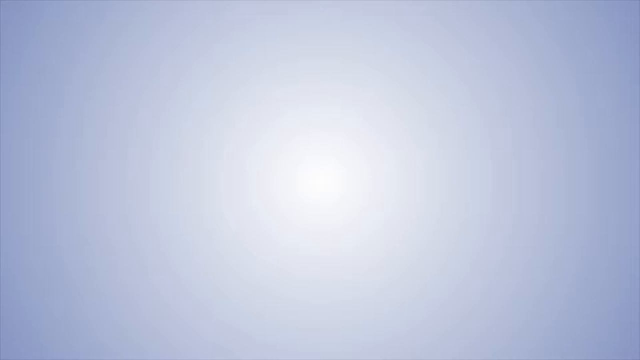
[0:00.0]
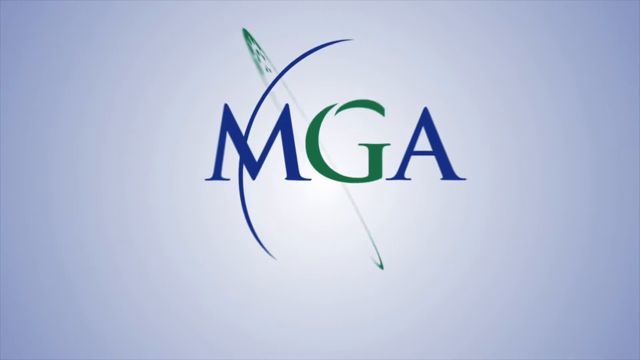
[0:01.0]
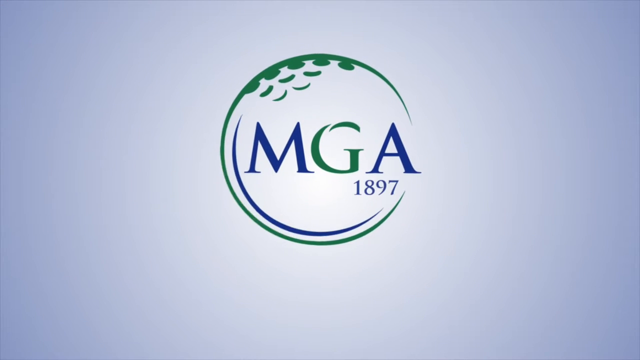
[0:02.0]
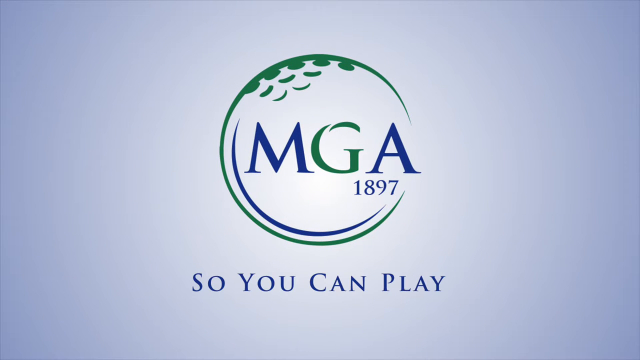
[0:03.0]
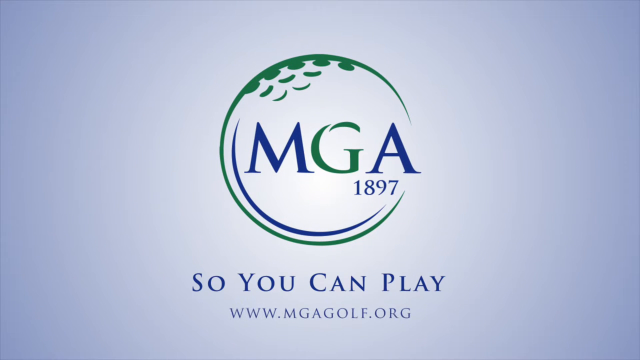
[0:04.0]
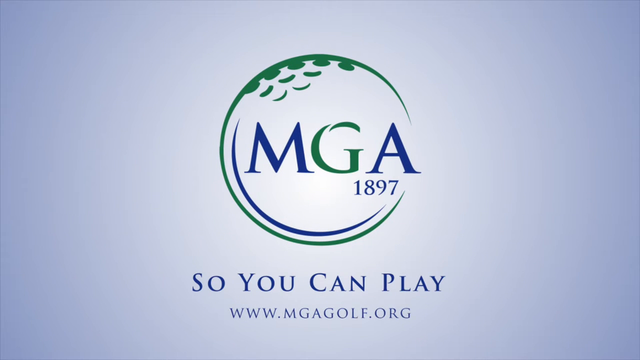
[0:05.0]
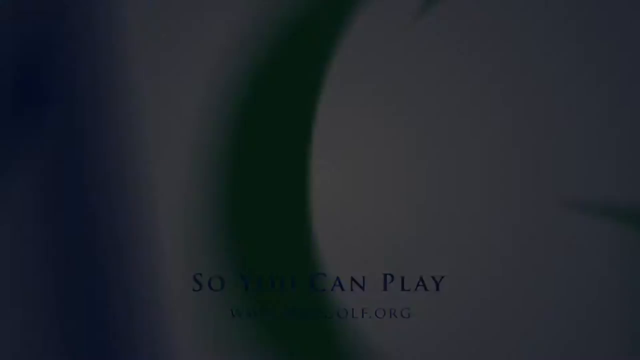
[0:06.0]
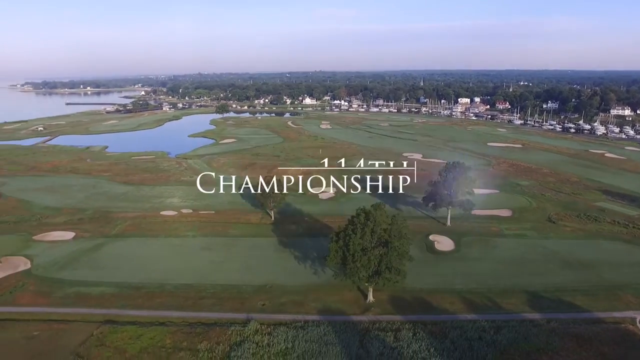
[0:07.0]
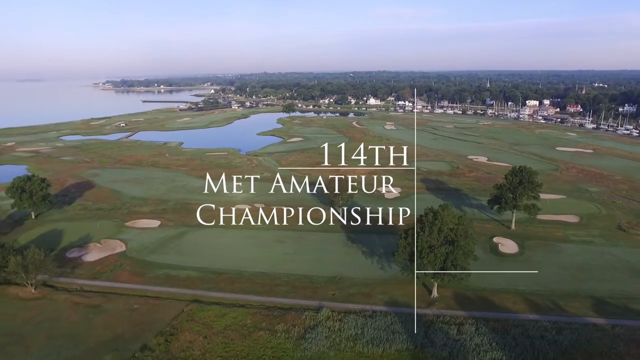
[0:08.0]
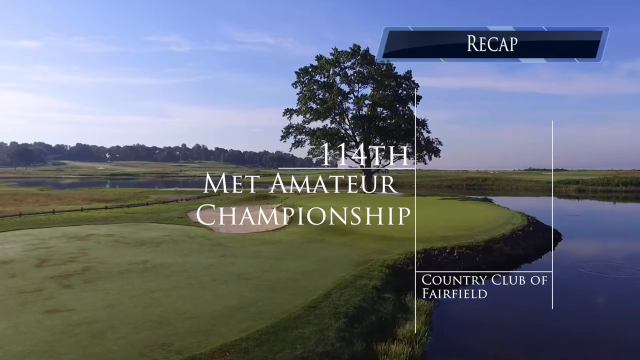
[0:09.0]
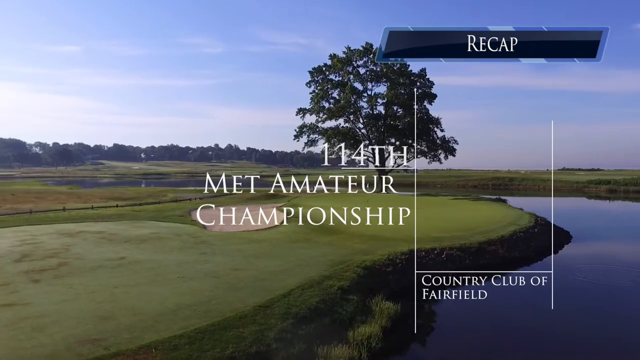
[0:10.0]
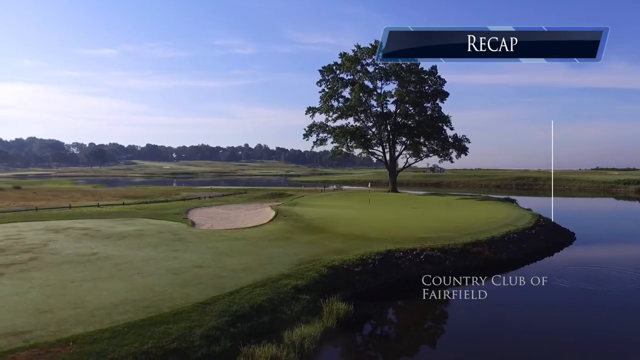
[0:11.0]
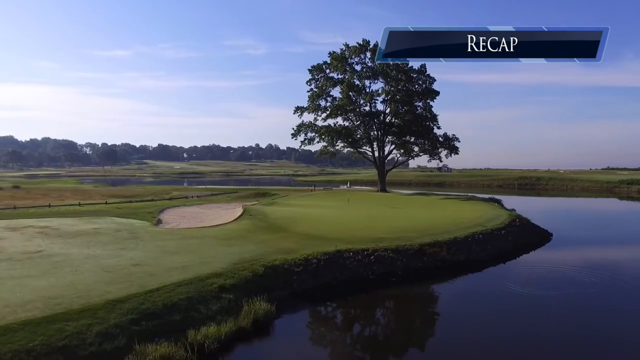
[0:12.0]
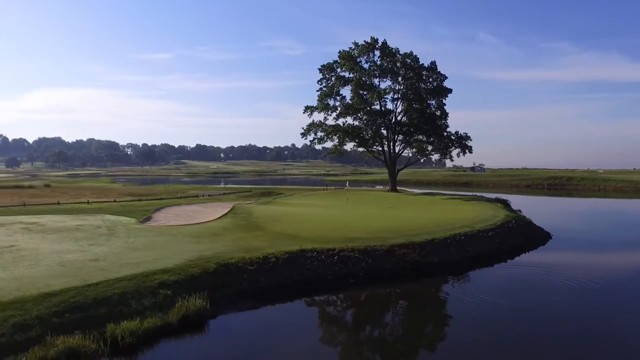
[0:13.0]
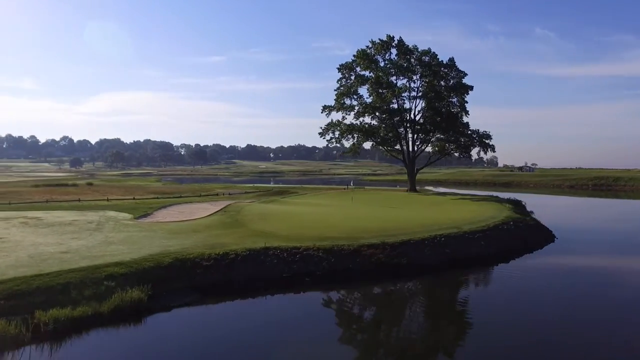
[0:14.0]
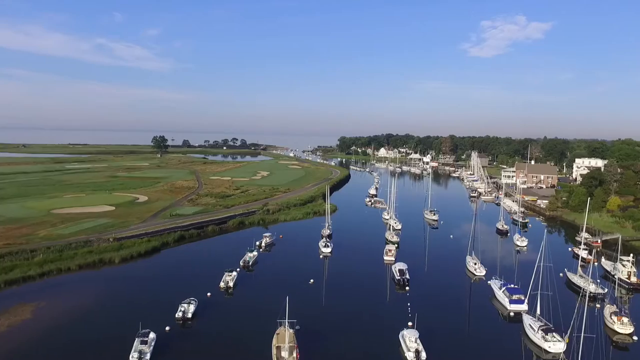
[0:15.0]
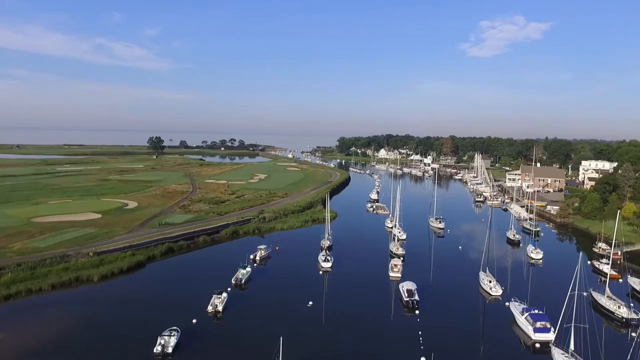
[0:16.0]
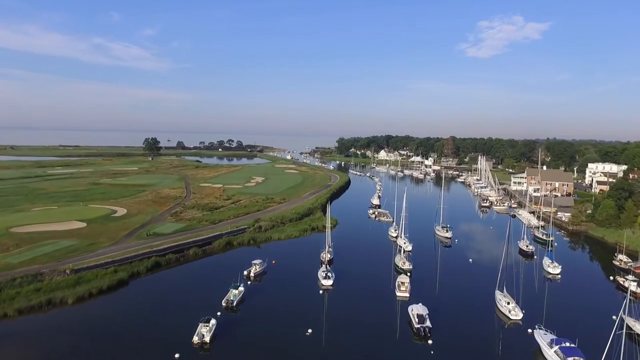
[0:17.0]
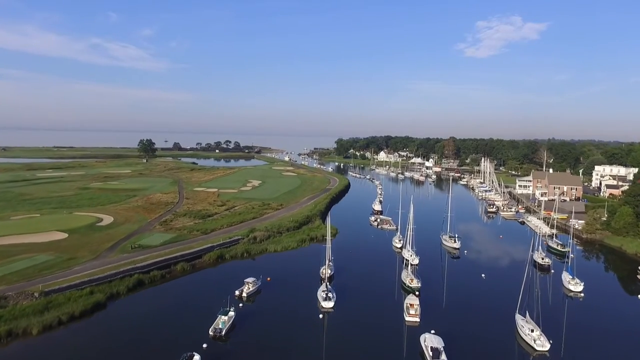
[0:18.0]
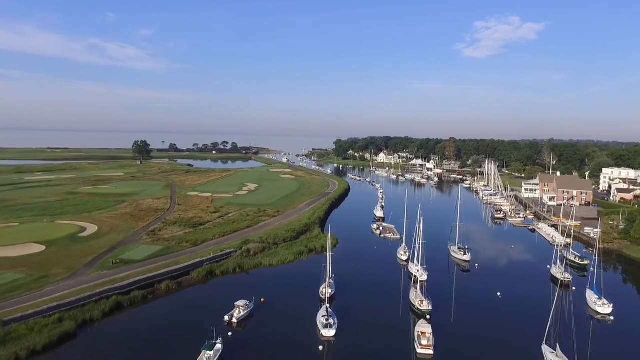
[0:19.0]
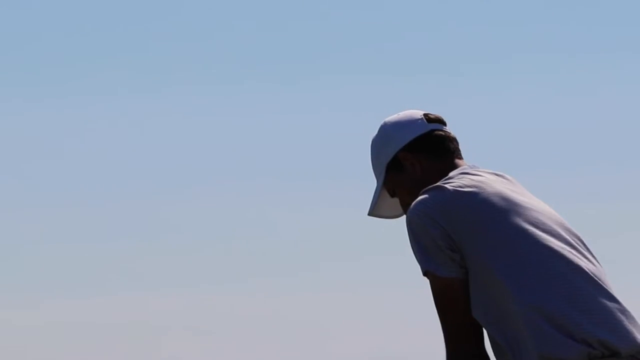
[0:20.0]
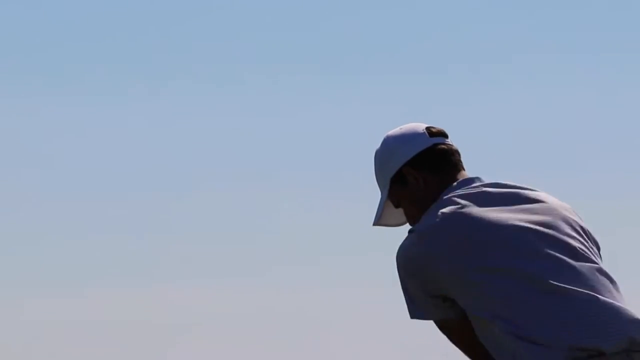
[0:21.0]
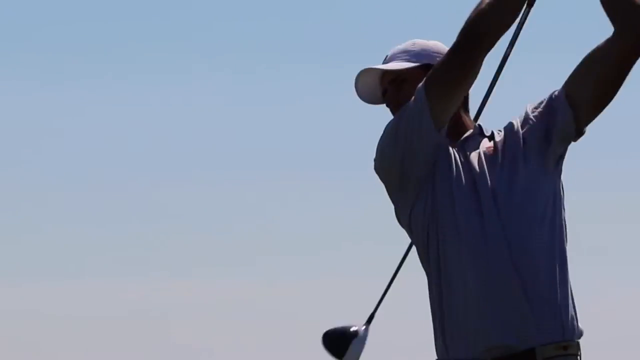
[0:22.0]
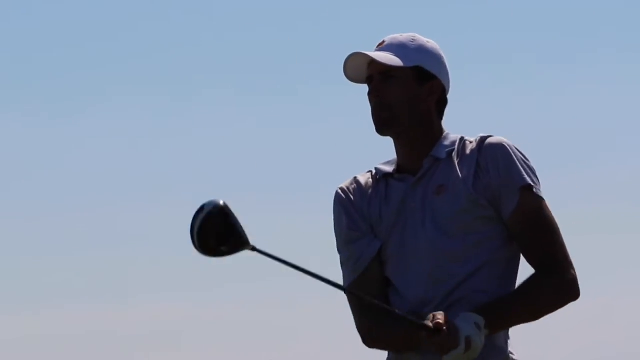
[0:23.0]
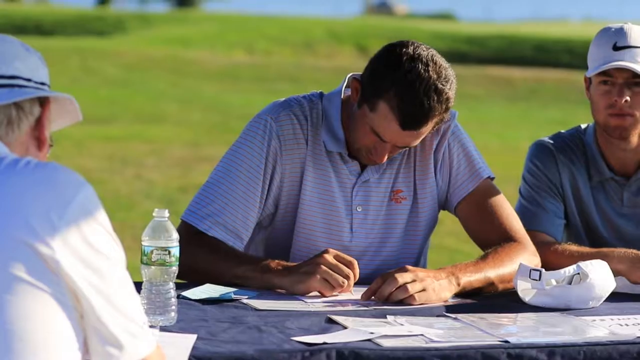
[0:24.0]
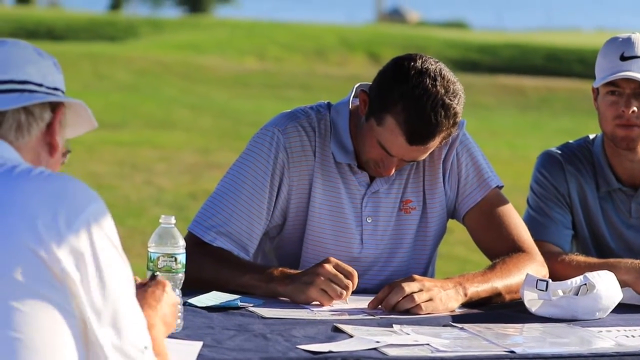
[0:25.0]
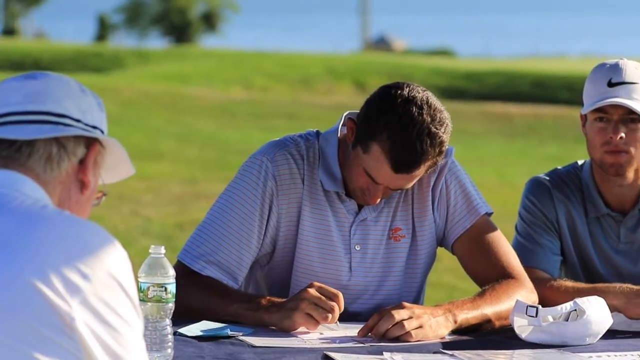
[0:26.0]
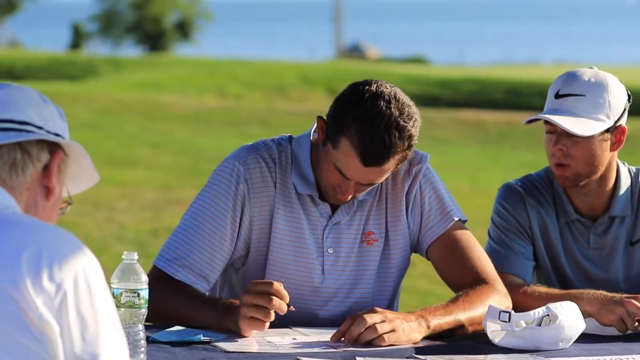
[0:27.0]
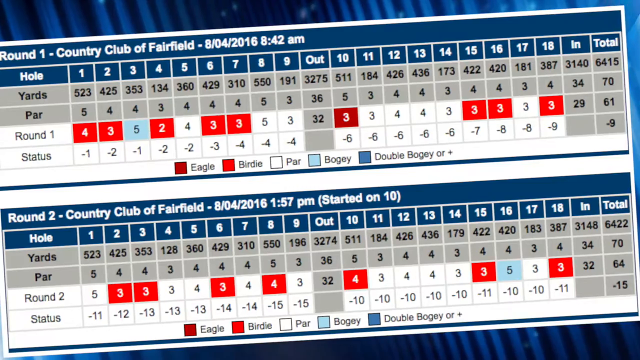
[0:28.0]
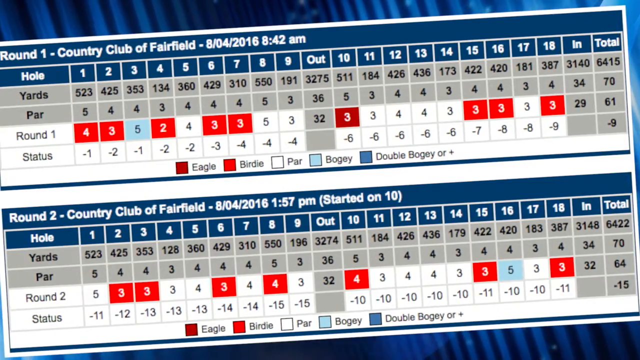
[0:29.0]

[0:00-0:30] A text intro reads "MGA 1897", "so you can play" and "www.mgagolf.org" over a background of kind of a sky blue/white gradient. The MGA 1897 logo is a green outline of a golf ball. What appears to be an overview shot of a golf course follows, perhaps created by a drone. The text "recap" appears in the top right corner, along with text reading "114th Met Amateur Championship Country Club of Fairfield", apparently the location of the video. The scene has a big tree, and a river flows through the golf course under a blue sky with sporadic clouds. Another drone shot shows boats resting in the harbour and some buildings. A man wearing a white polo shirt and a white cap swings a golf club, then some men chat and write on a picnic table. An image of a scorecard then appears.